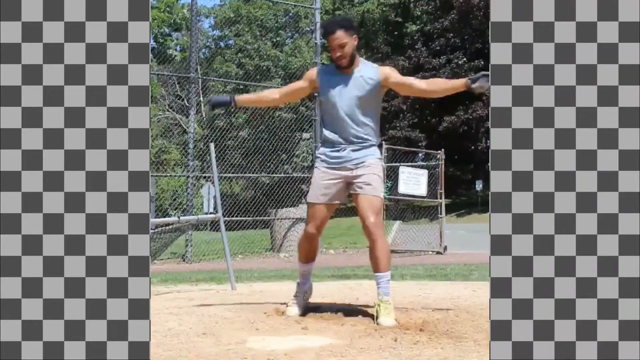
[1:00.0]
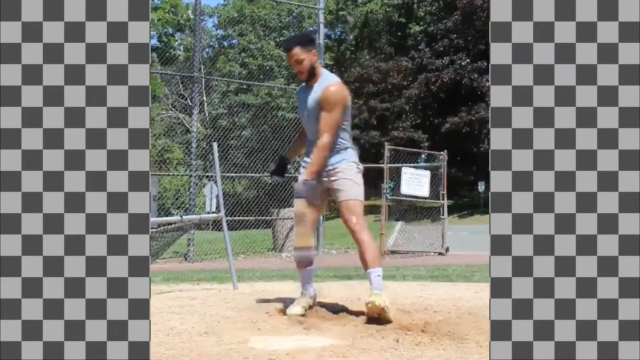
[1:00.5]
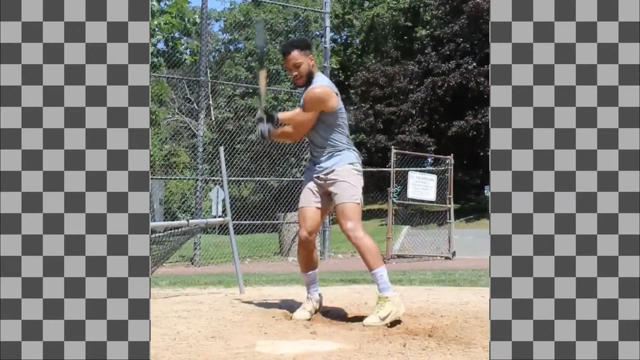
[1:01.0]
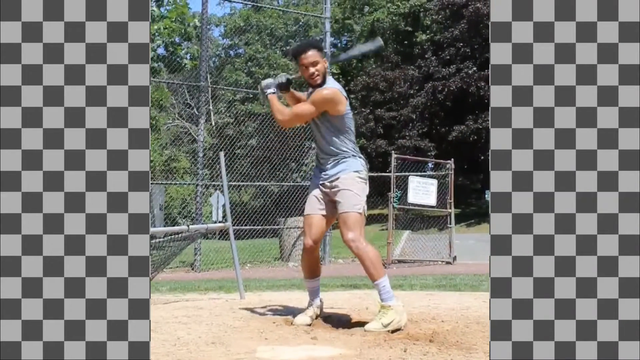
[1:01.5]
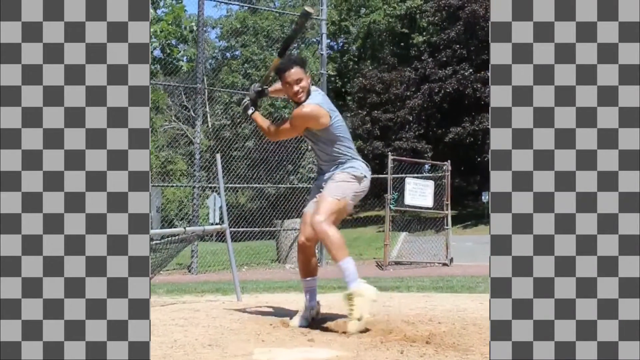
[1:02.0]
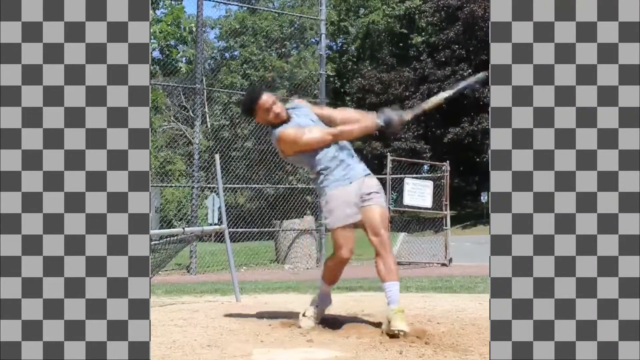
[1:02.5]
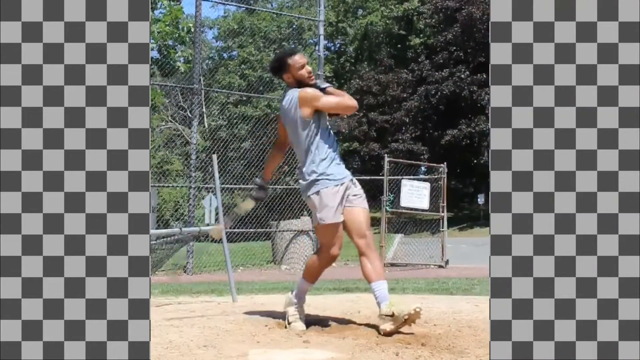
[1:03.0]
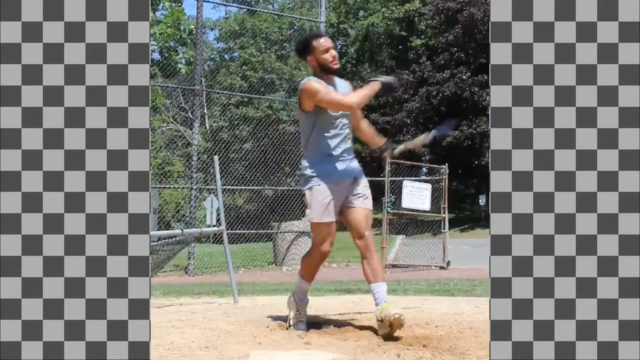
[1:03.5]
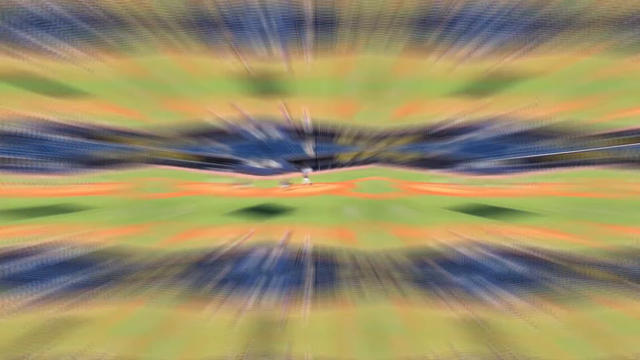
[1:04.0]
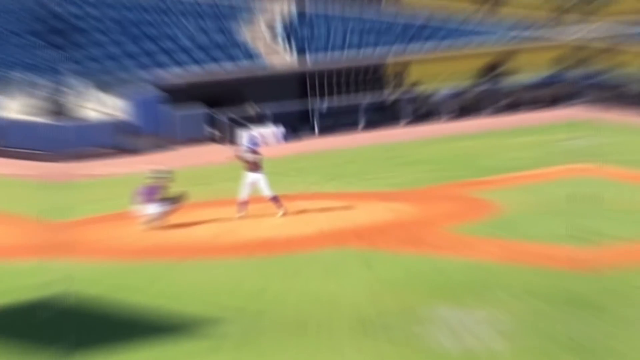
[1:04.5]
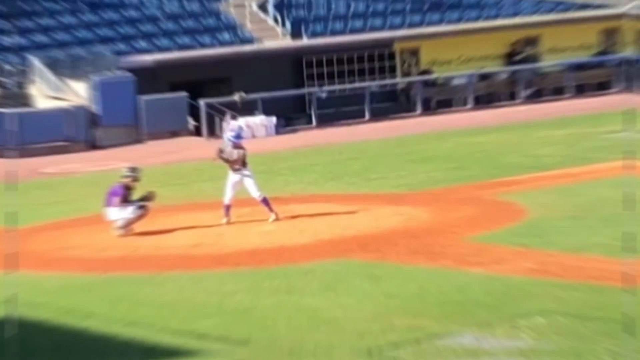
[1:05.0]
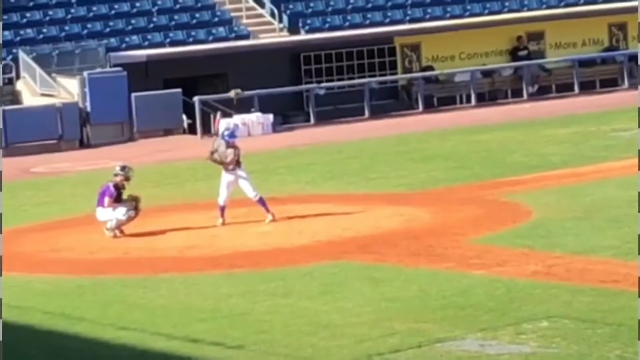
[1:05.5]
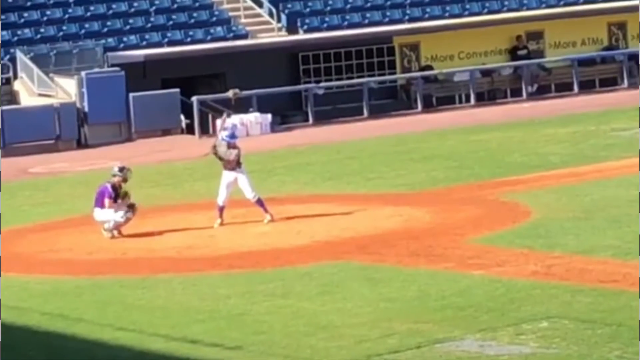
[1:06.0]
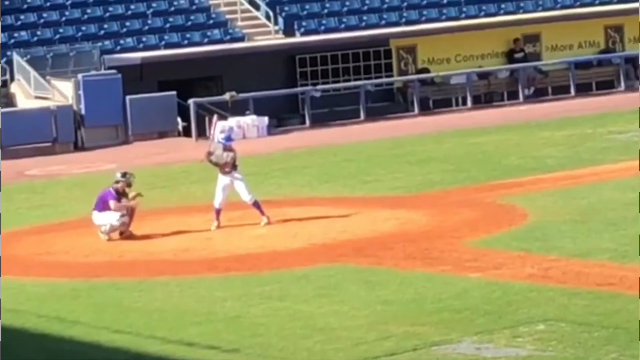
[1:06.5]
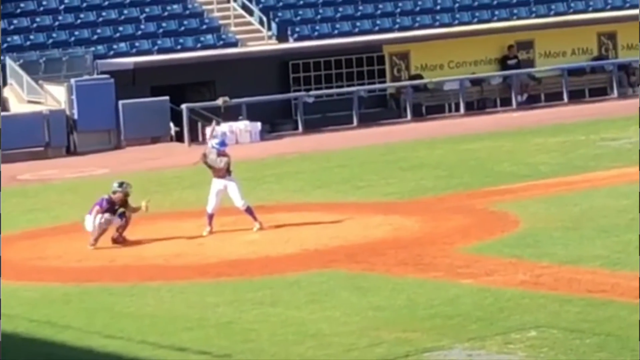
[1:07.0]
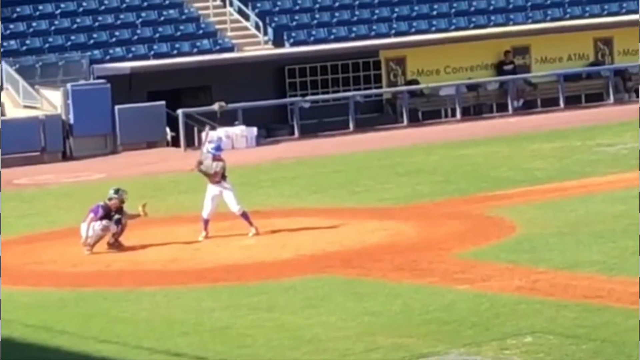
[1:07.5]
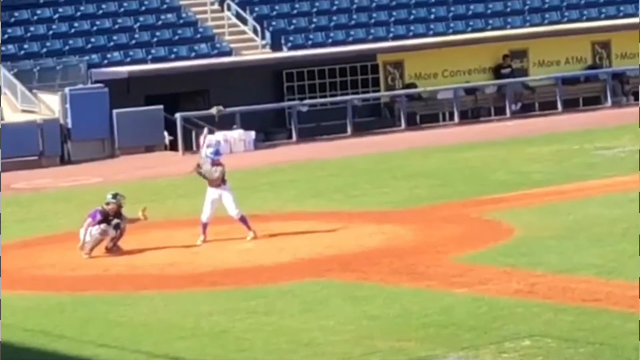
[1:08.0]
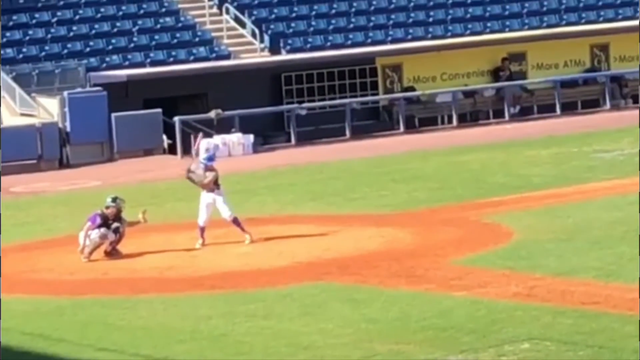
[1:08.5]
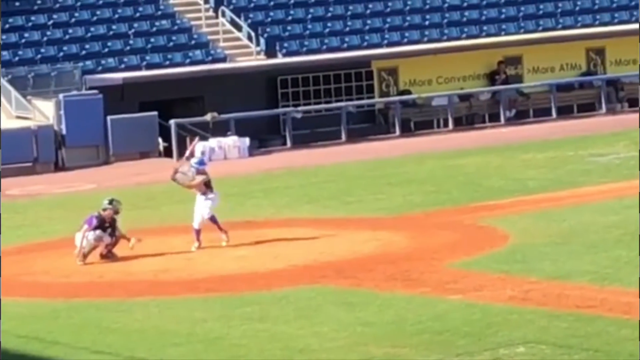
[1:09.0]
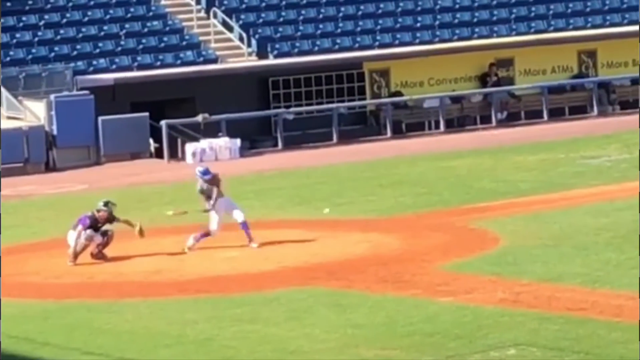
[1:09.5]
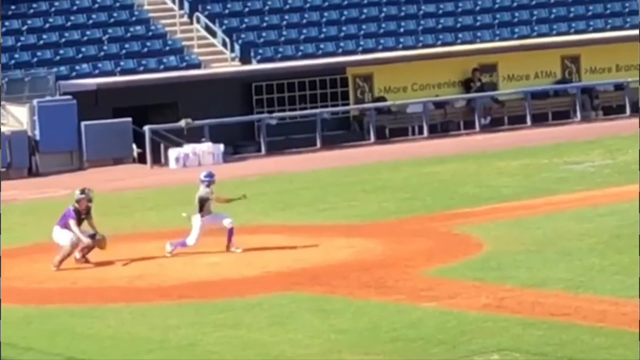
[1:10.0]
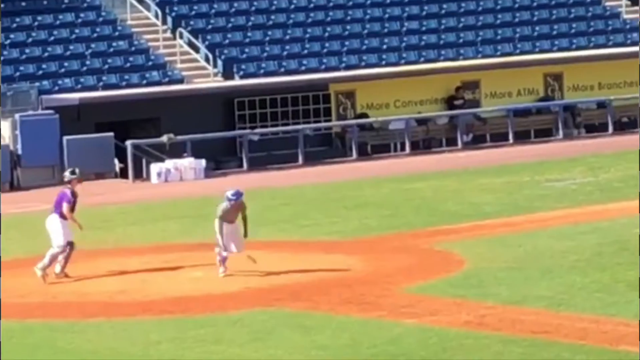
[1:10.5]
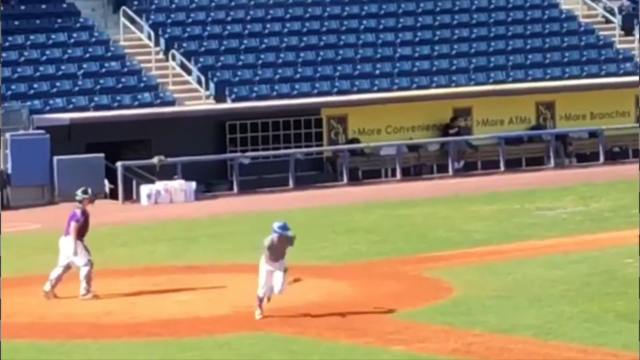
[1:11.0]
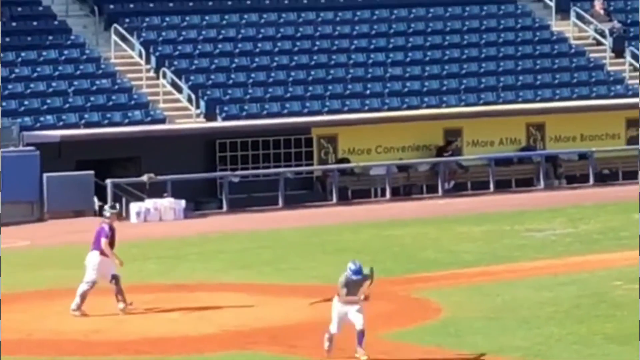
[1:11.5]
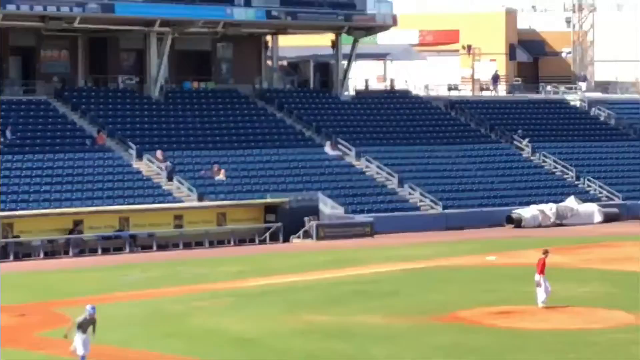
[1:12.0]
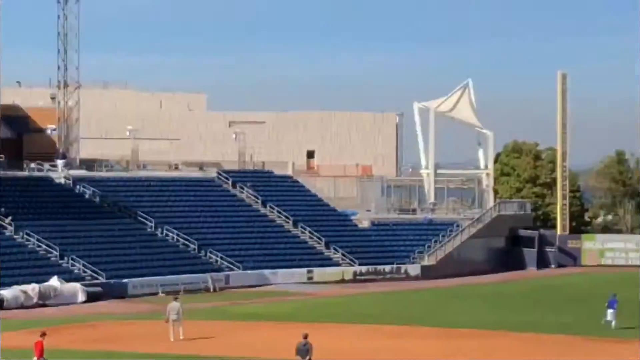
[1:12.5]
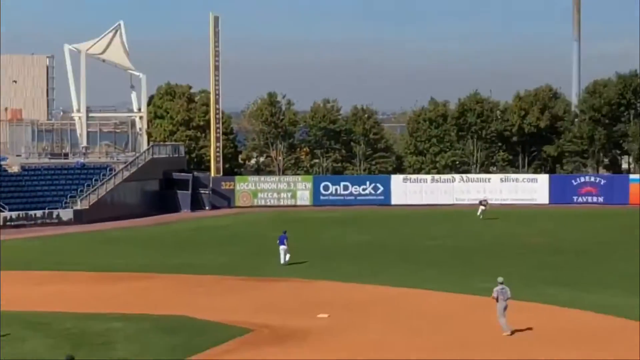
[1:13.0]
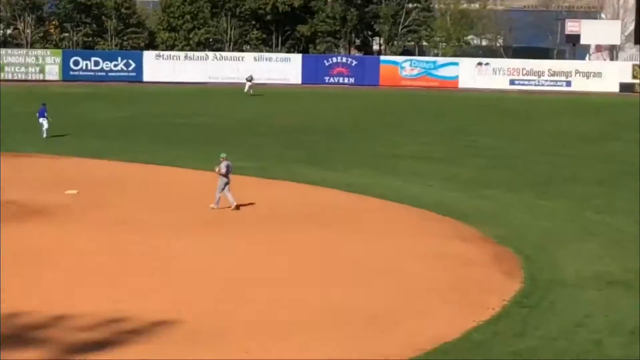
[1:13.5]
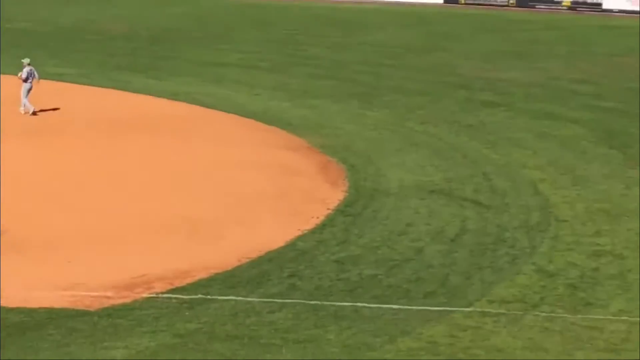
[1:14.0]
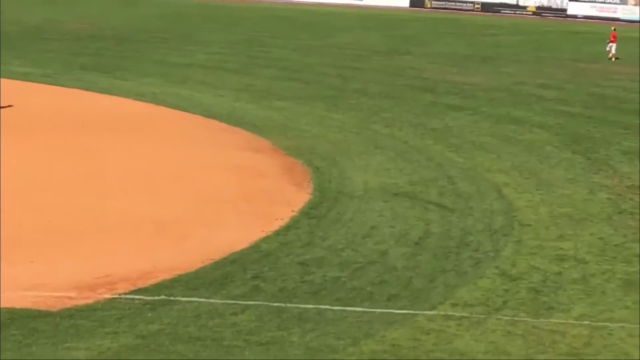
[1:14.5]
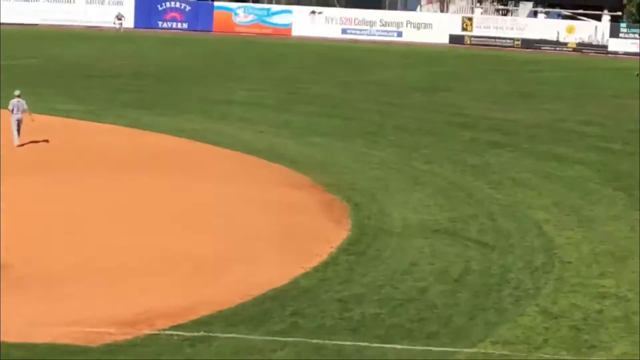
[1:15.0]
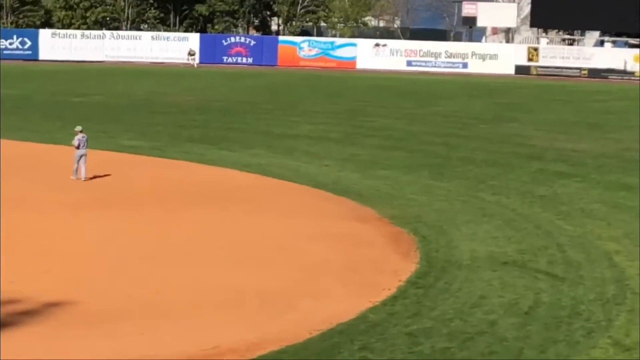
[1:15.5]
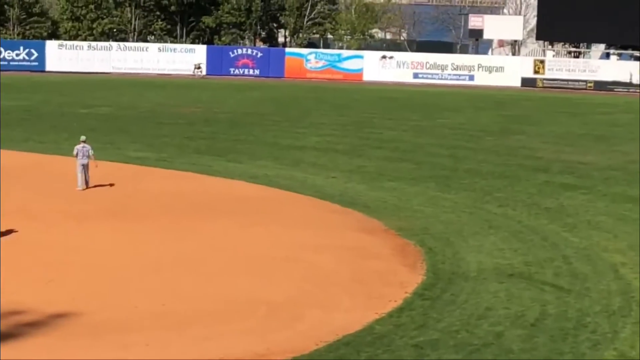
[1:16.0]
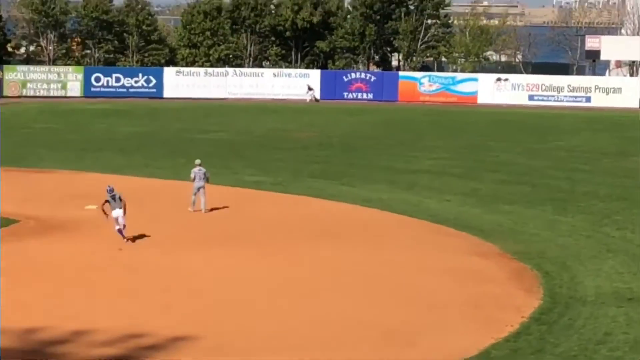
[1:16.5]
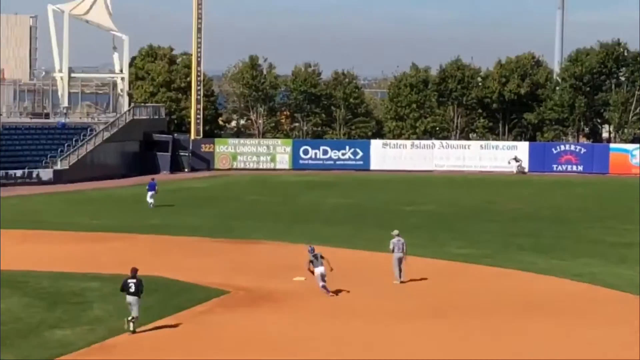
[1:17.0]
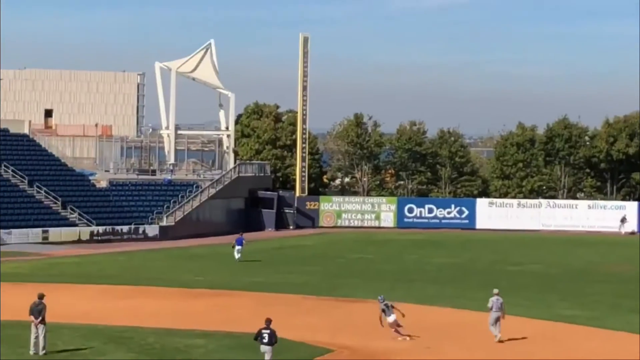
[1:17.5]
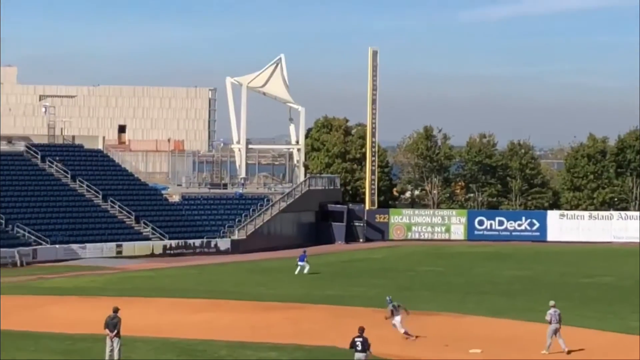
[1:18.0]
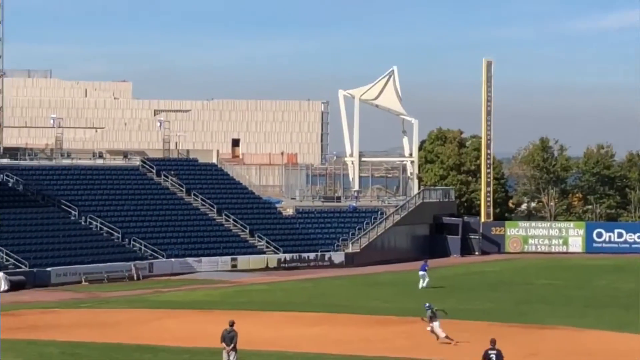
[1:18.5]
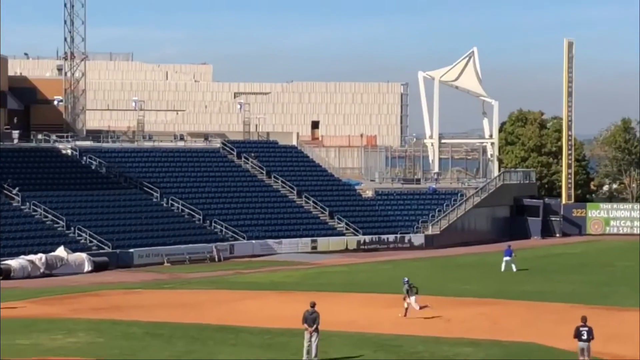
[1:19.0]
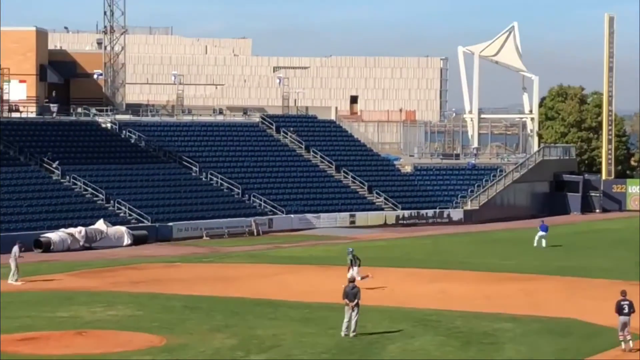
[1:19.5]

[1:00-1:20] Outdoors on a baseball field, a man practices hitting; it looks like it could be a practice, since there are not many fans in the stands. At the beginning, a checkerboard pattern in white and gray or dark gray appears on the left and right. He hits the ball pretty far, deep into the backfield area, and as it lands, runners take off and players run the bases. He wears a light blue tank top and hitting gloves.